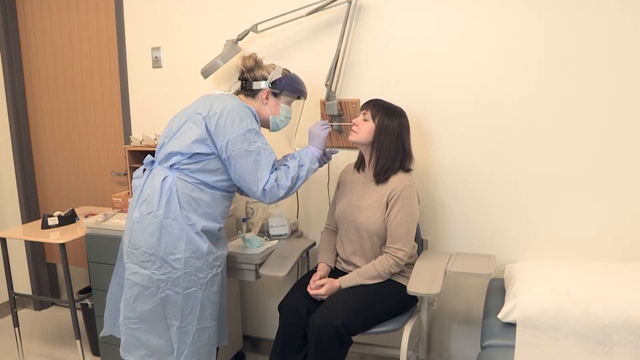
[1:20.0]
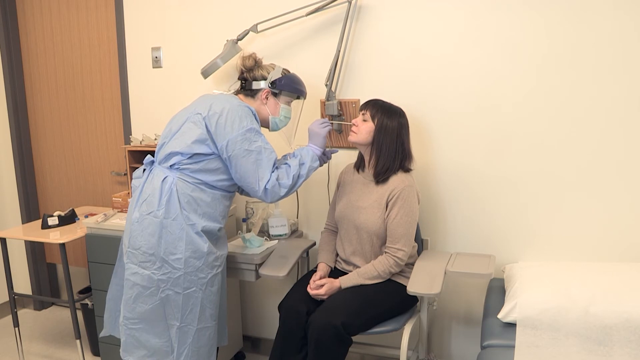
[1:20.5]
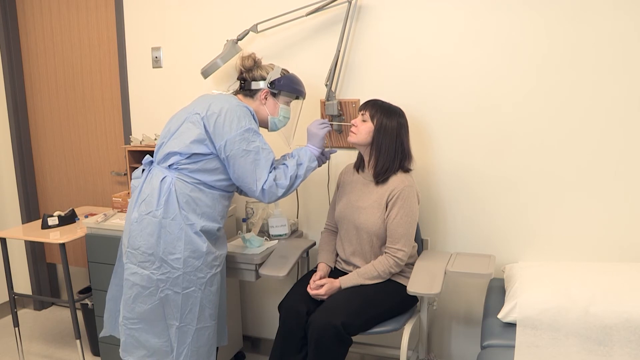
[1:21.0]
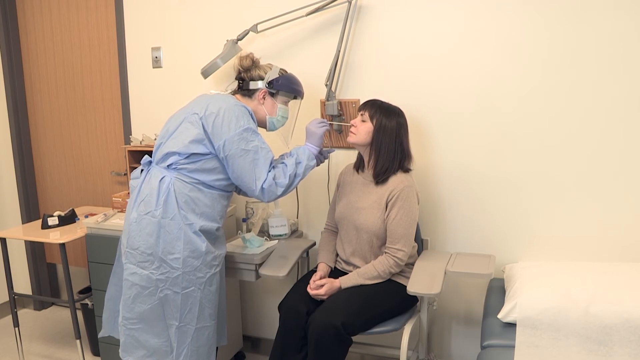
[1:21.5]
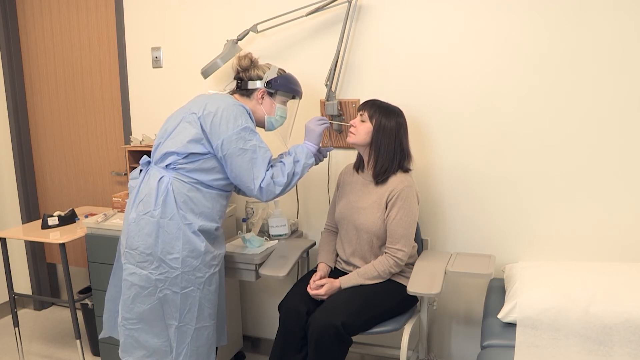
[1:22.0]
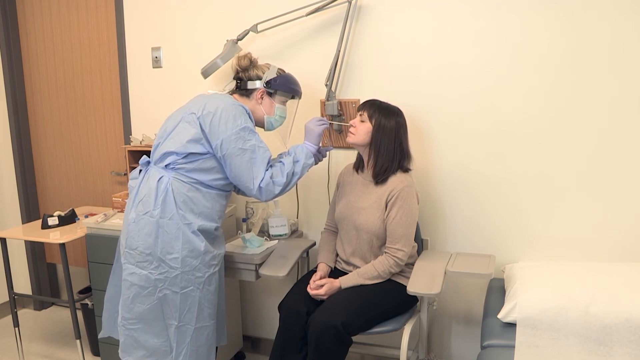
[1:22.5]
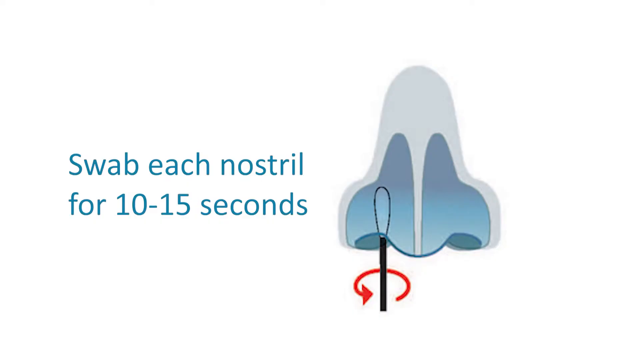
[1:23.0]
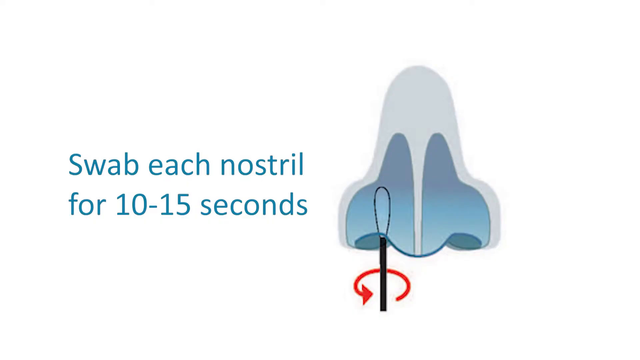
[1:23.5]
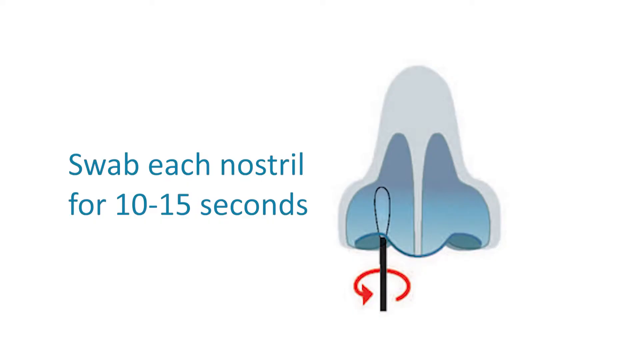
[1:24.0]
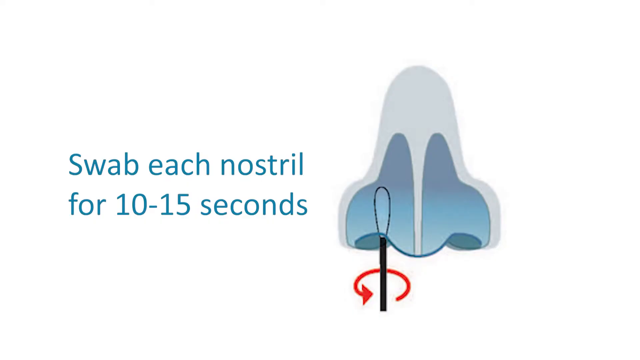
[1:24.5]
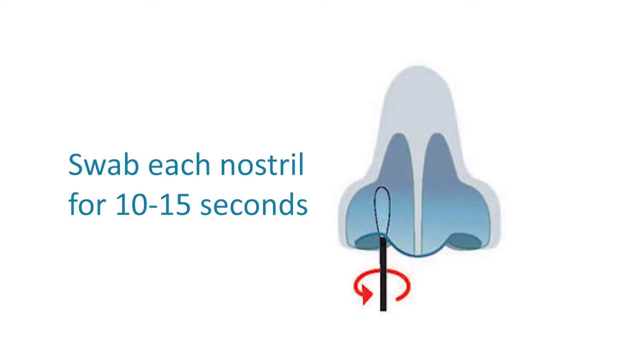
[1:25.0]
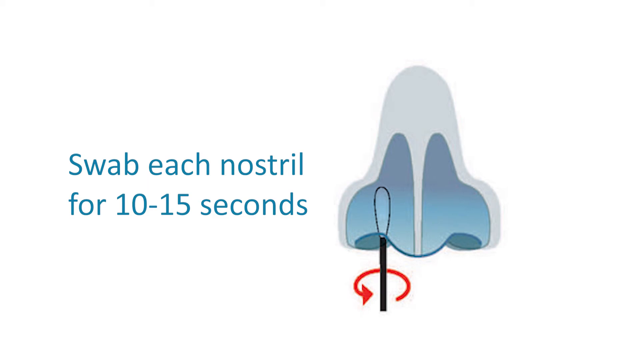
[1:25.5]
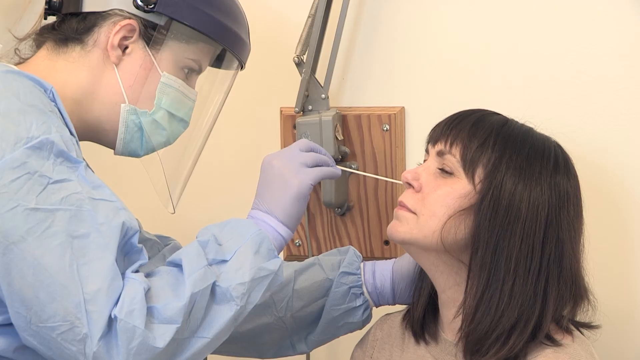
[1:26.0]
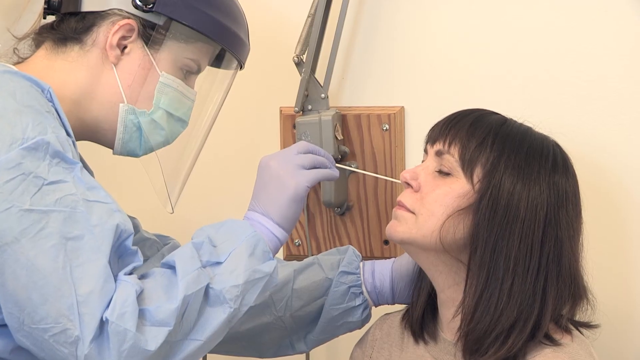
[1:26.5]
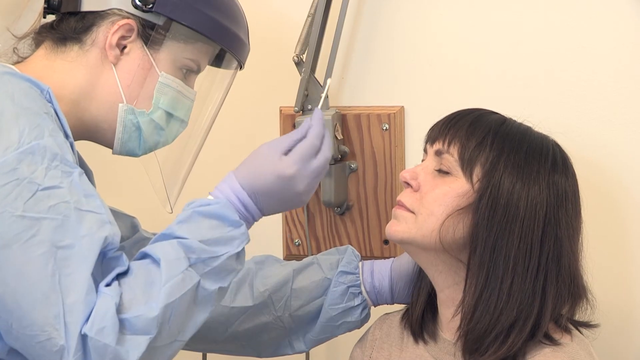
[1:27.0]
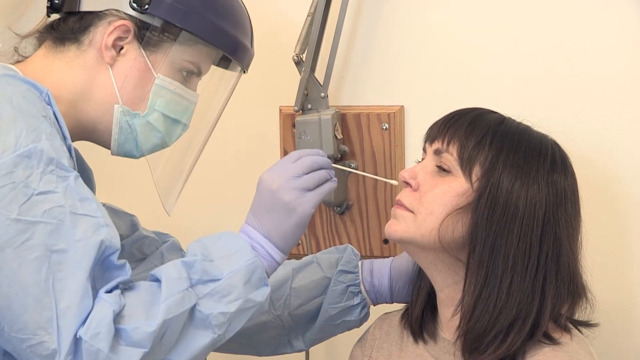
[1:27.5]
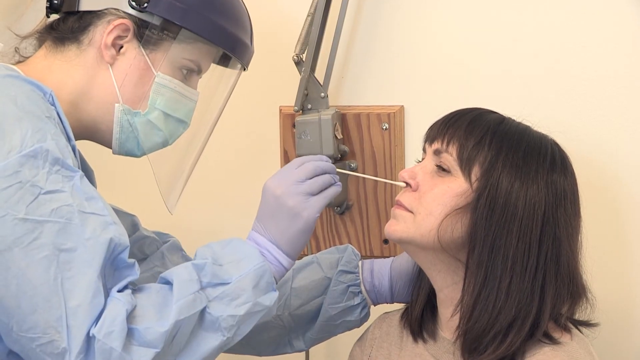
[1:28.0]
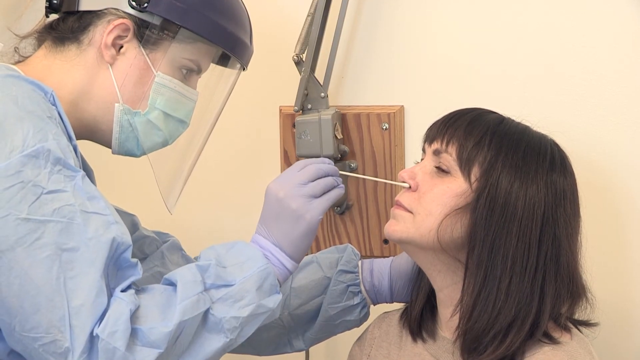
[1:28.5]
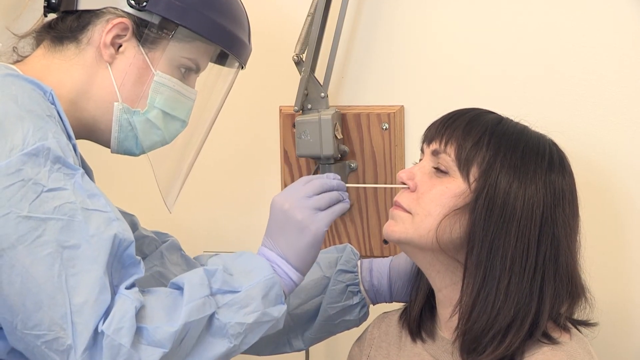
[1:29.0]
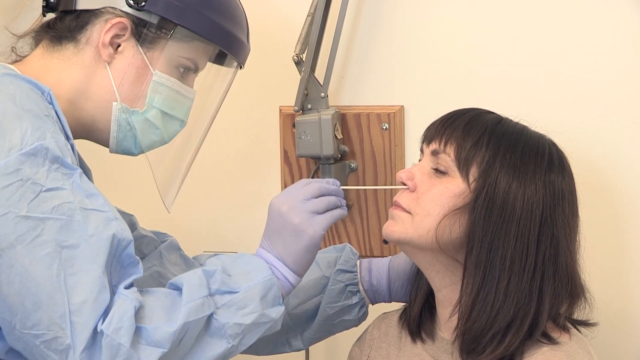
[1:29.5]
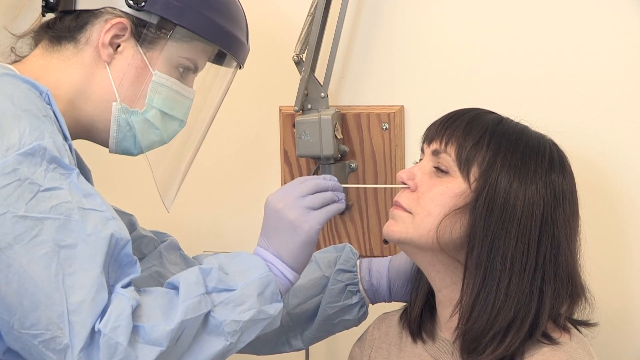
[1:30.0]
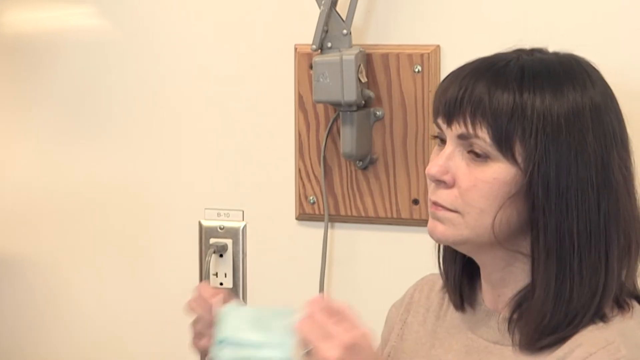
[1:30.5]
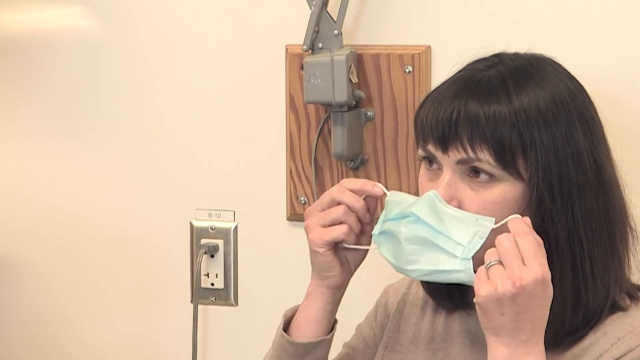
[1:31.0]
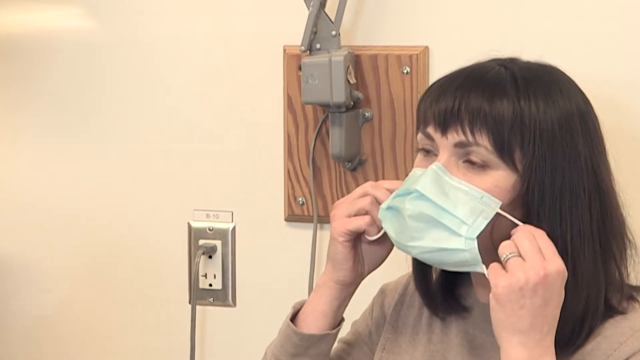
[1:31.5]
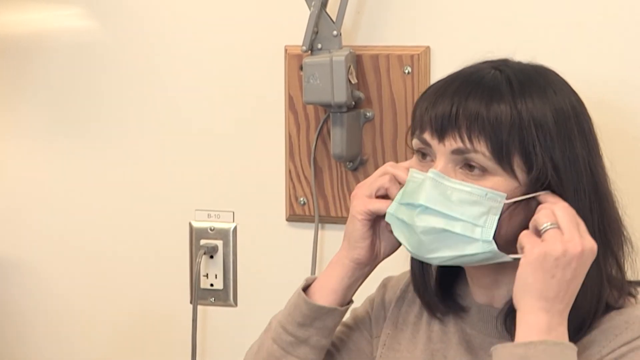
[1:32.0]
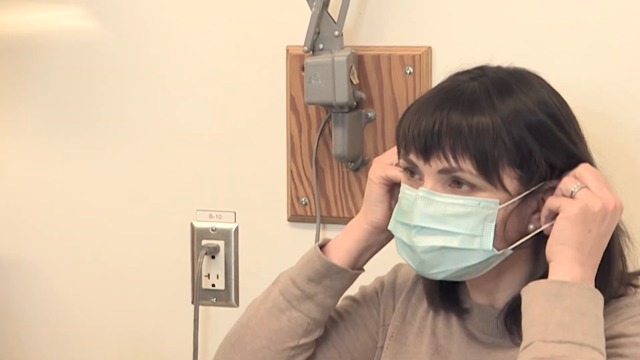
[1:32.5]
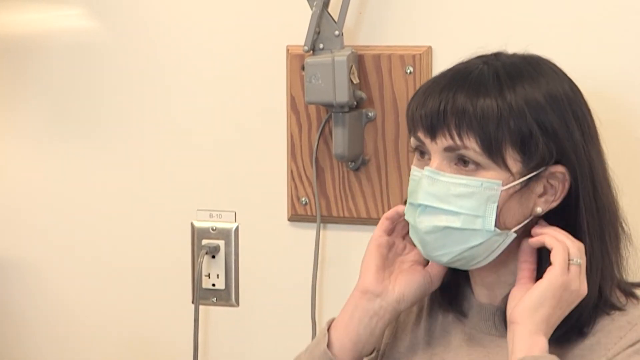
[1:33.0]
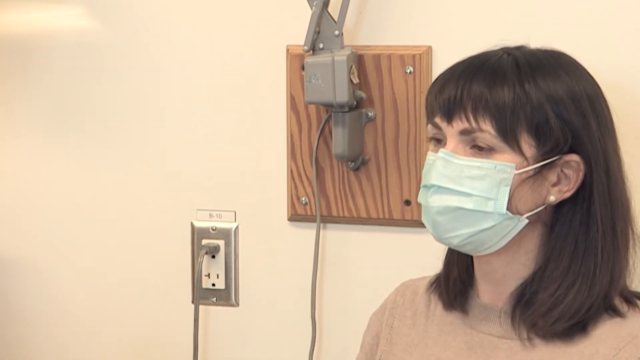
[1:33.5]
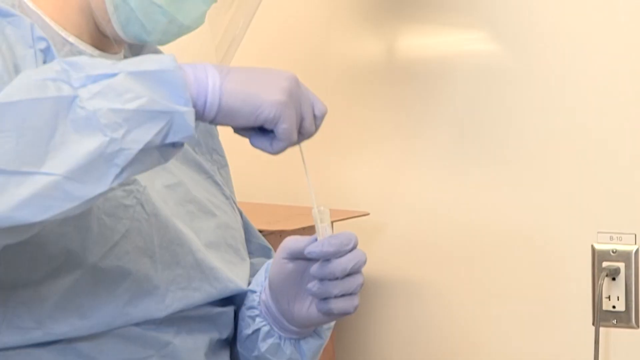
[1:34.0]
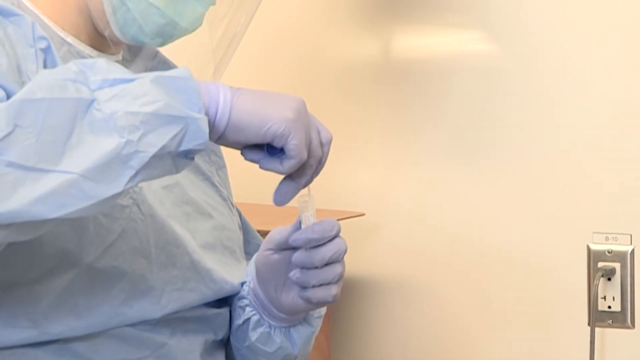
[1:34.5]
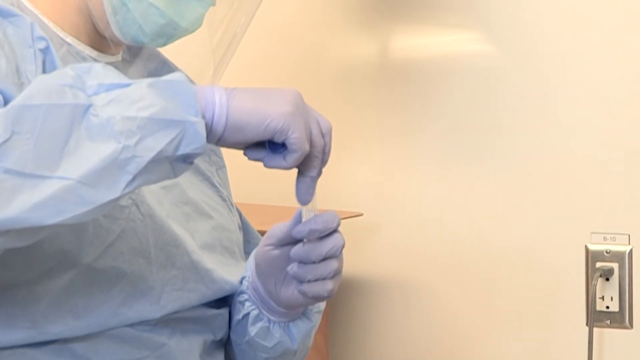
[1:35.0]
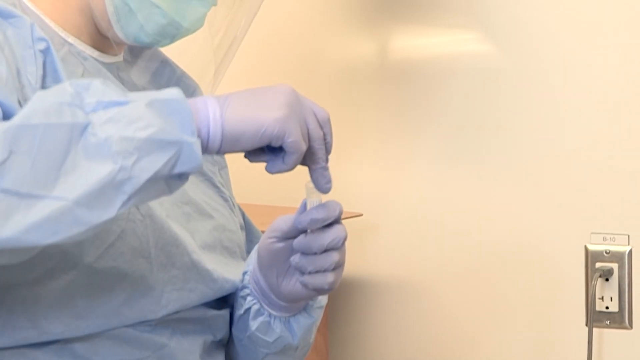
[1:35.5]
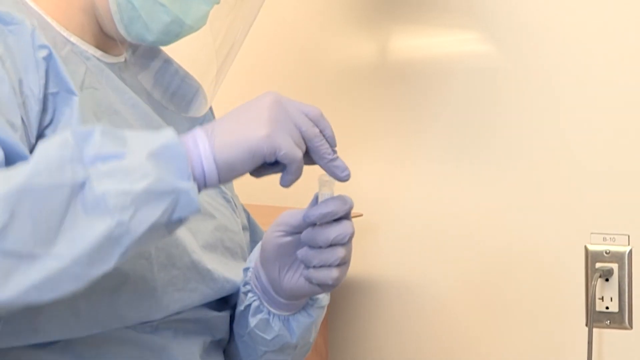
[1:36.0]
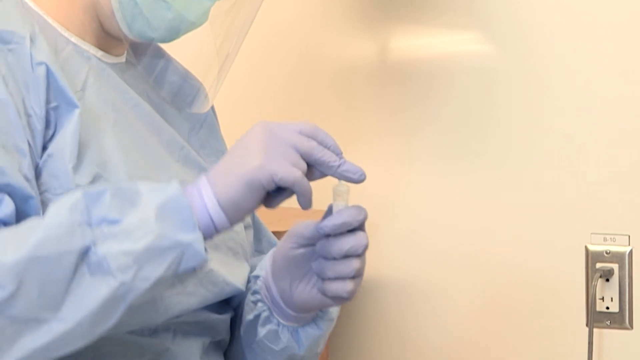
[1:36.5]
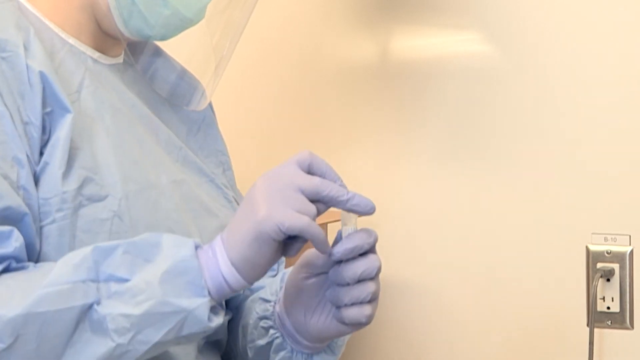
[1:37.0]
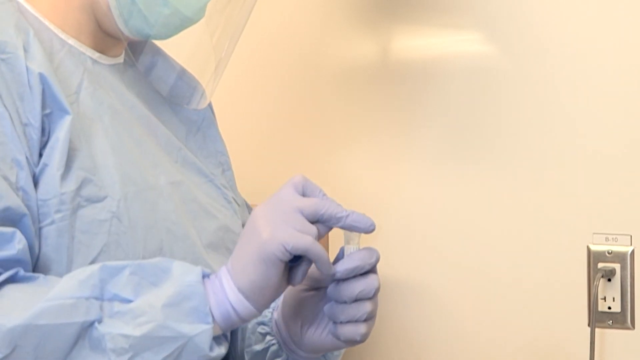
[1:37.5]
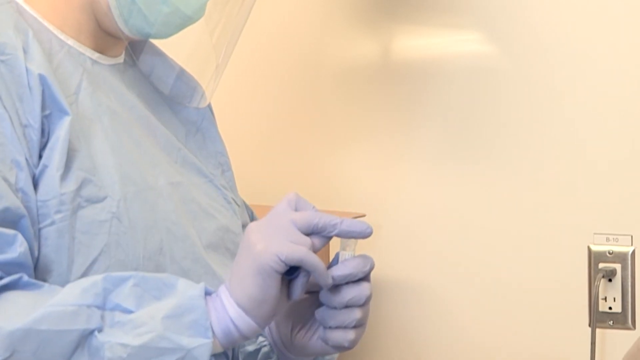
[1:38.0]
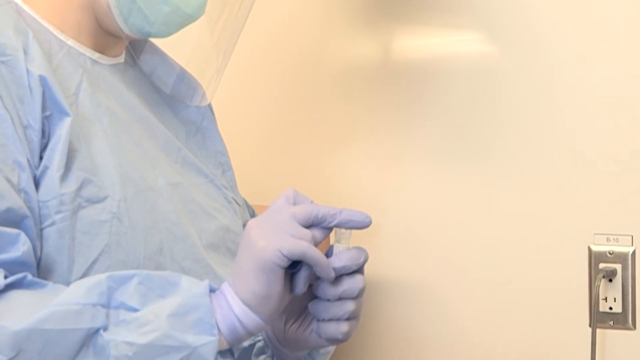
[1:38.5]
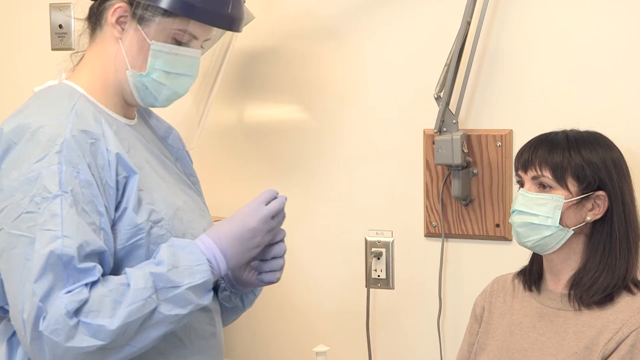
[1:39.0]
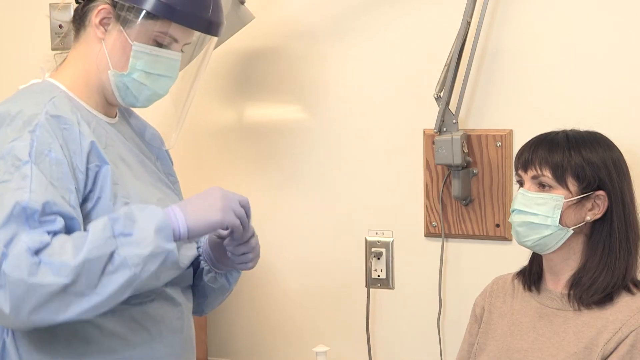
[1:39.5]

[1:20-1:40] The woman in protective equipment uses the same swab to scrape the inside of the seated woman's nose. A white screen then shows a still graphic of a nose, blue on the inside, with a swab inside the left side of the nostril and a red arrow kind of showing the direction to swab. To the left of the nose, blue letters read "swab each nostril for 10 to 15 seconds." The woman stands over the seated woman and swabs both nostrils. When she is done, the seated woman grabs her blue mask, puts it behind both ears, and puts it back on her face. The woman who did the test places the swab inside the vial, kind of snaps it off, then twists and puts the top back on the tube.